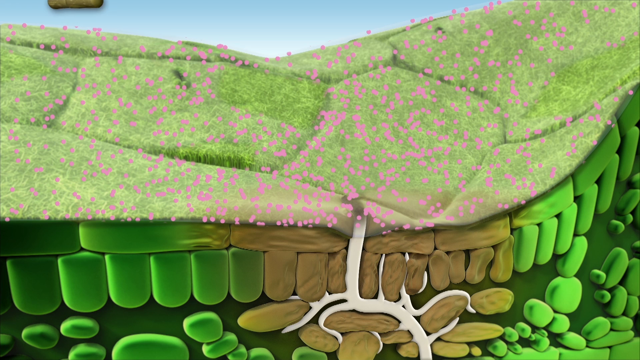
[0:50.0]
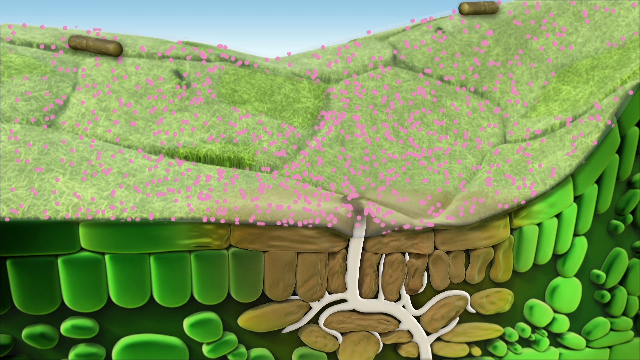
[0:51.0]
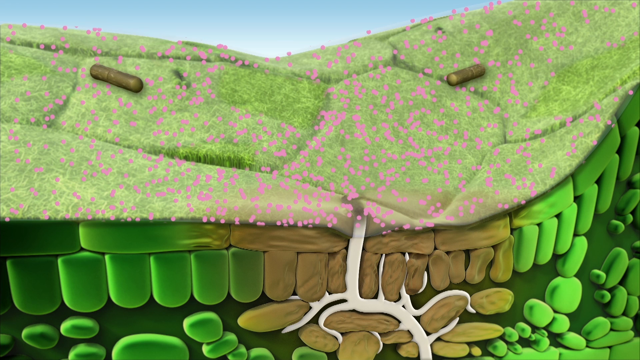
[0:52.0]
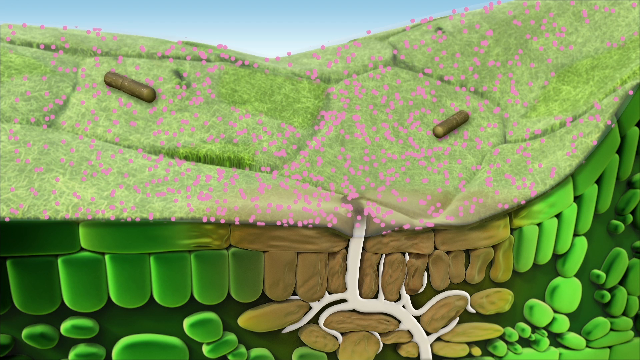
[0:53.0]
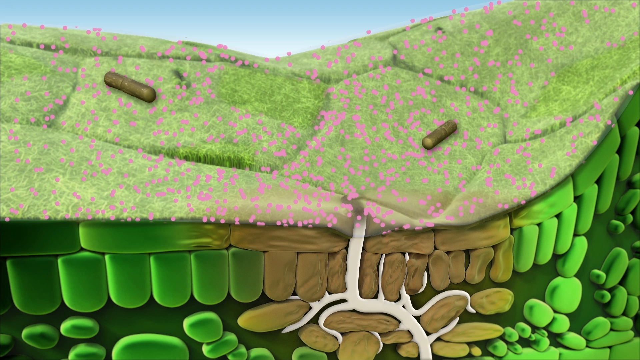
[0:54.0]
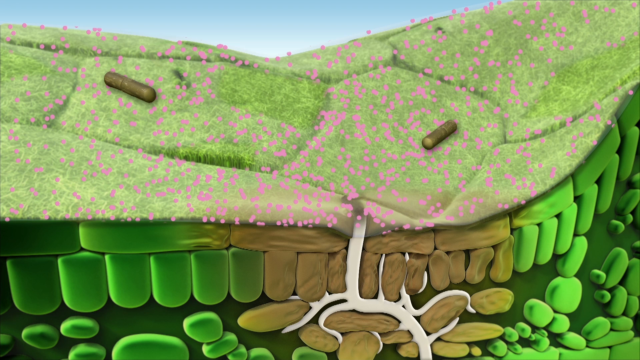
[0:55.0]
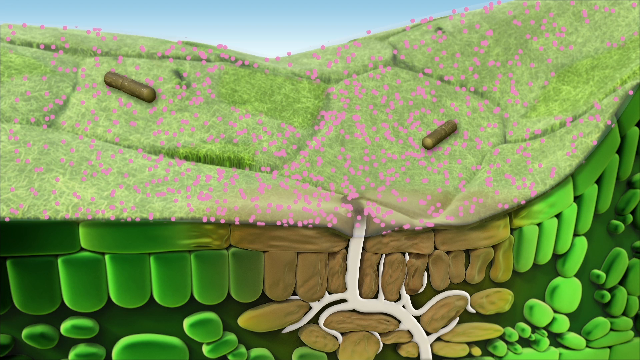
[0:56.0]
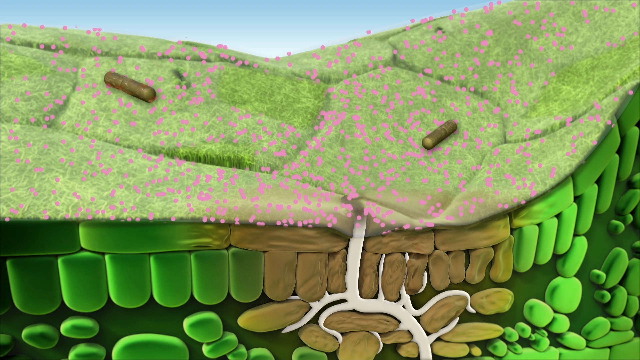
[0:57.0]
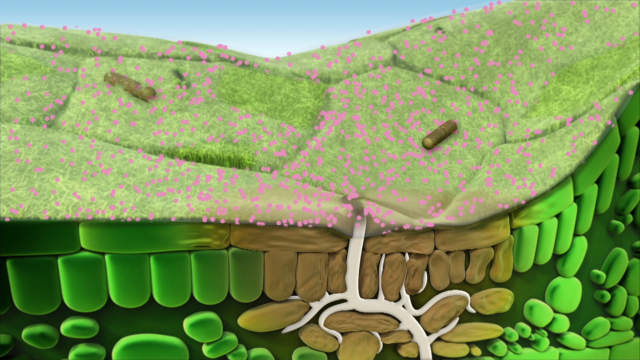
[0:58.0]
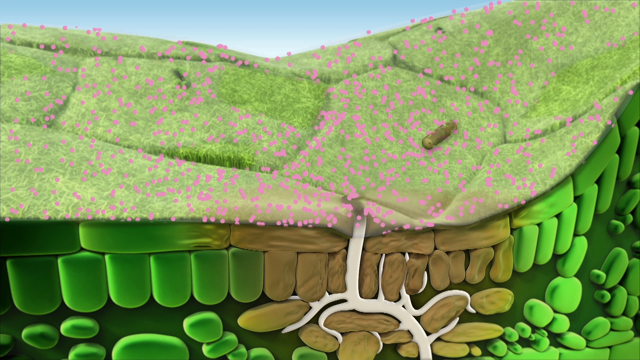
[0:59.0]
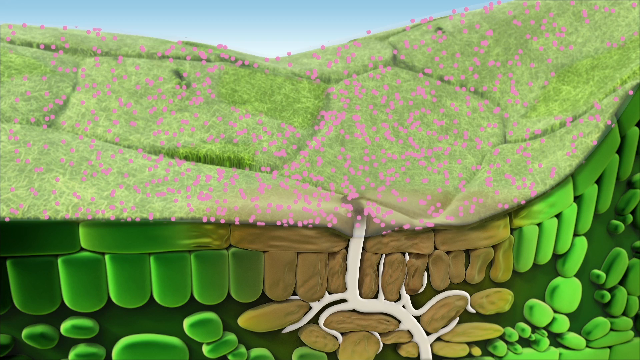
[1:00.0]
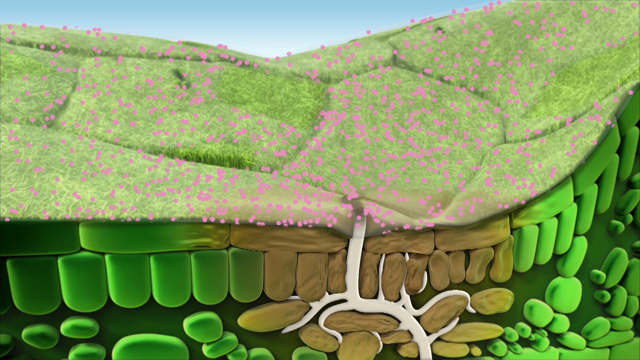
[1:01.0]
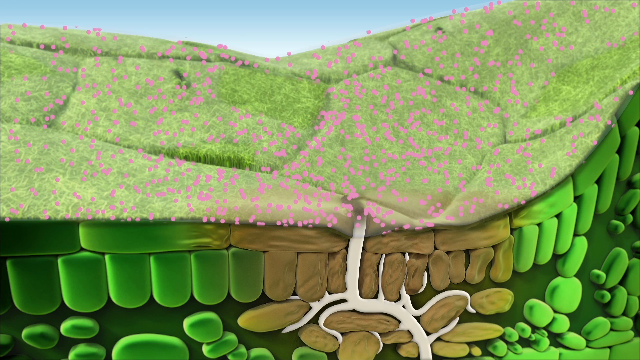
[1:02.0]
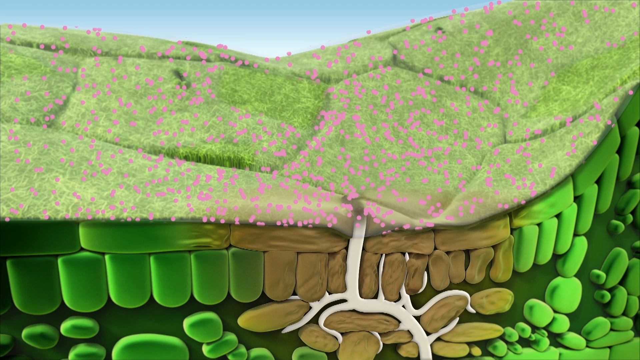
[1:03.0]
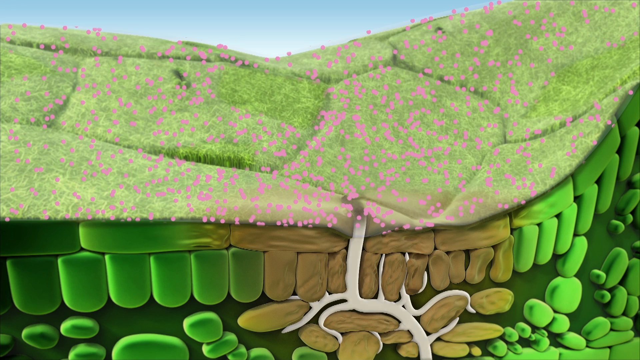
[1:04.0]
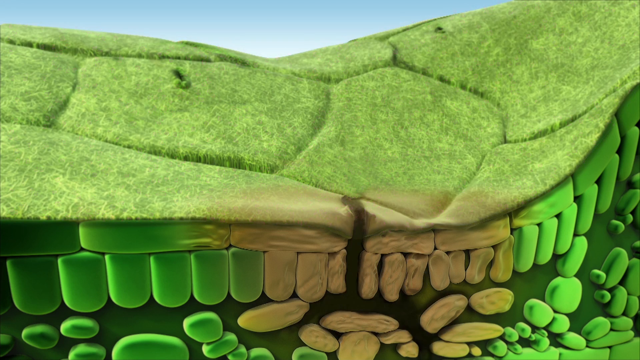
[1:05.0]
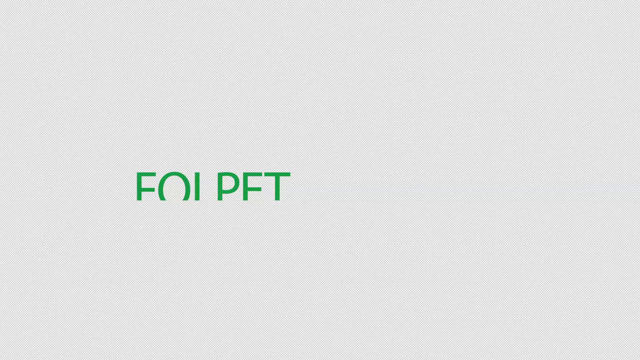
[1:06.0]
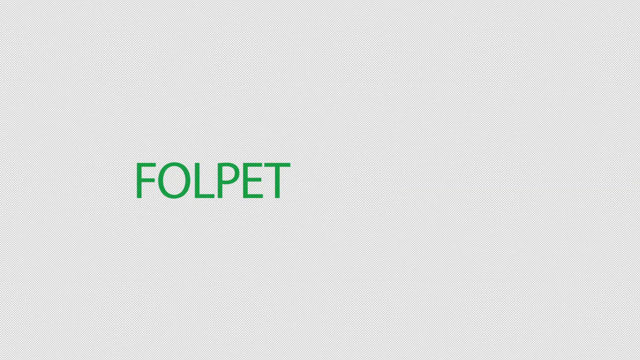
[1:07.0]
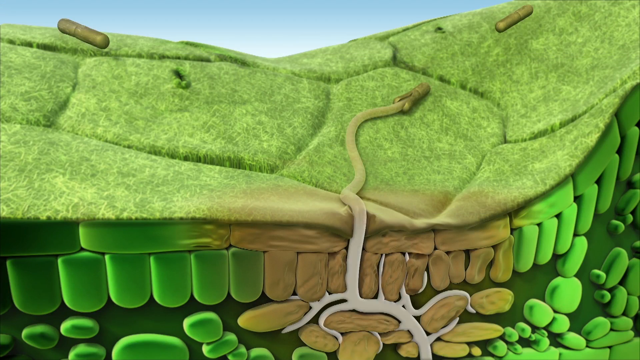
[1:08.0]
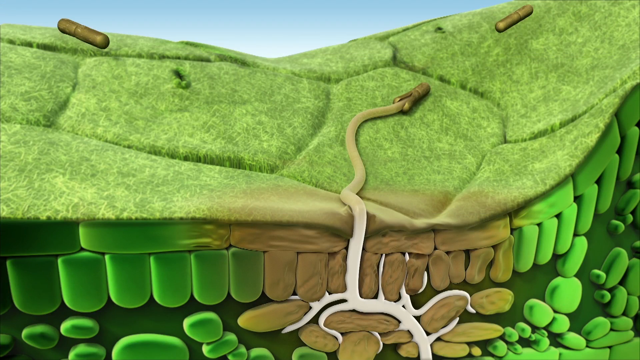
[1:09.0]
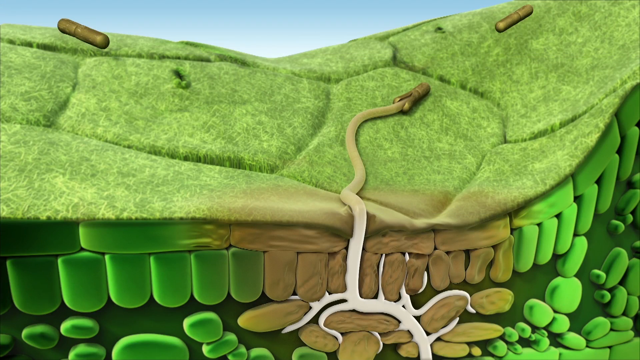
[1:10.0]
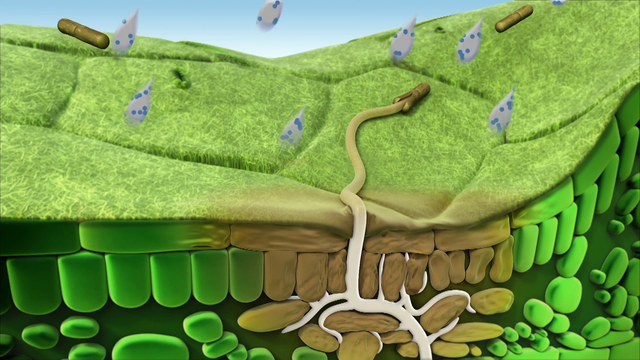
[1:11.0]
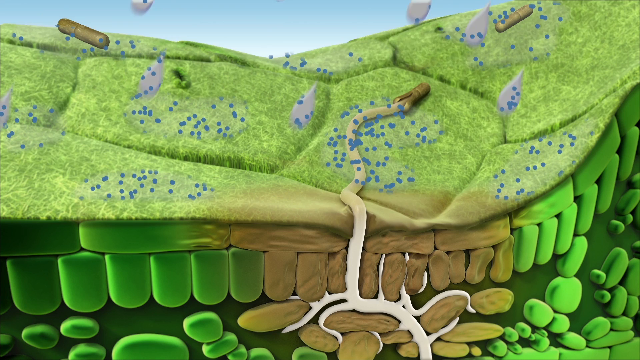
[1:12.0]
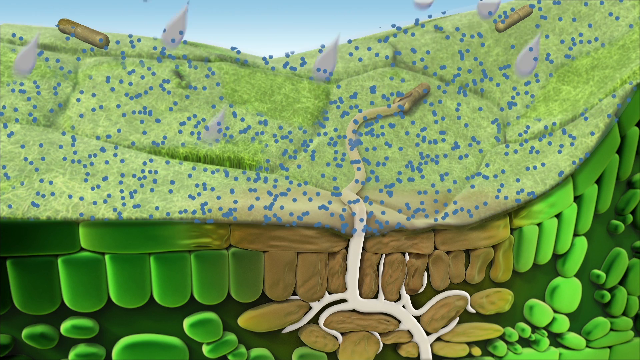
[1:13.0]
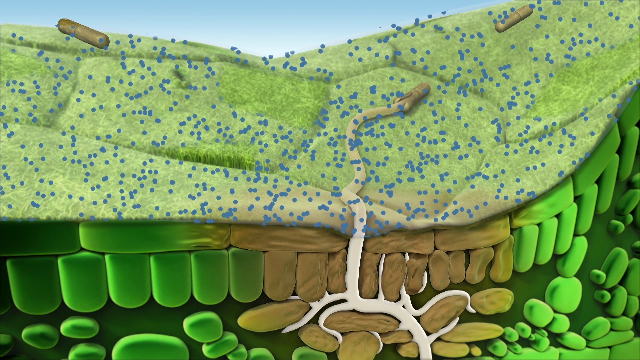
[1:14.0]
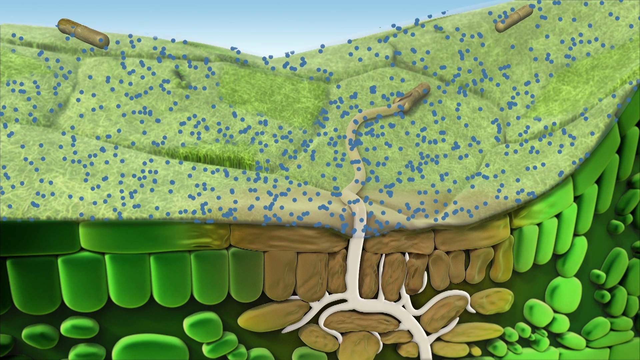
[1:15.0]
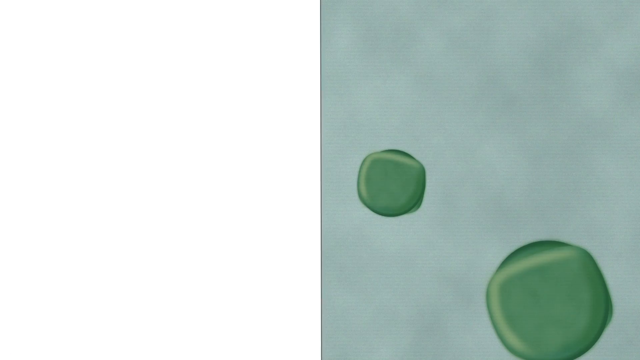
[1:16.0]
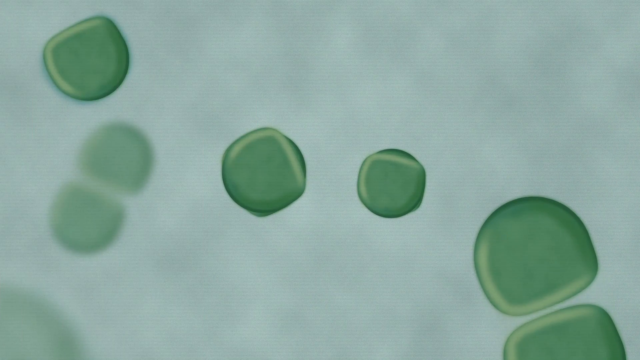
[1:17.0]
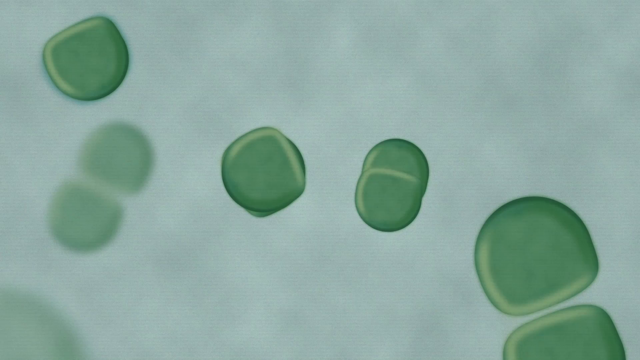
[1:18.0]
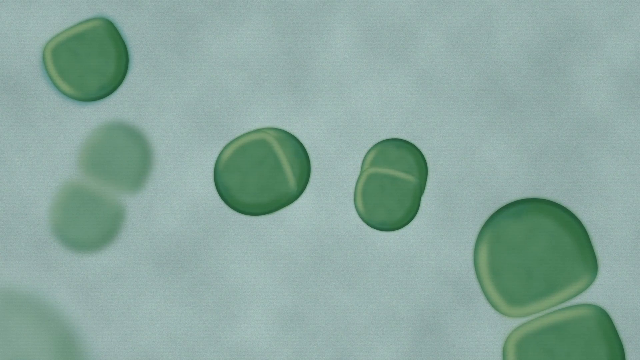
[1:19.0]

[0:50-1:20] Smooth, log-shaped brown items roll down the hill above the ground while the pink dots are still visible on the earth; what they signify is unclear. They kind of fade out of view after a few seconds. Another title screen appears with "FOLPET" in green writing in front of a white background. A transition leads to another diagram with another snake-like structure on the green hilly earth, and more rain droplets fall from the blue sky. These droplets contain blue dots, which seem to represent folpet. Another screen then shows what appears to be a view through a microscope, with small green blobs separating from each other, perhaps representing cells separating.